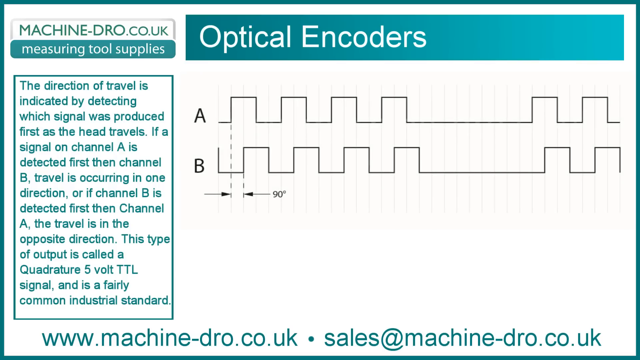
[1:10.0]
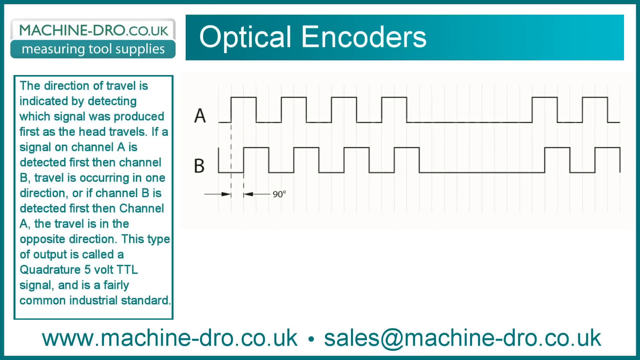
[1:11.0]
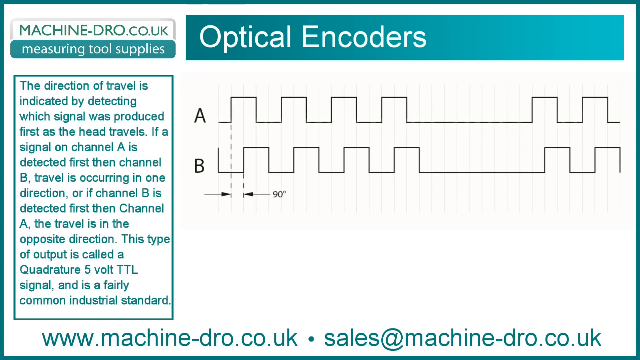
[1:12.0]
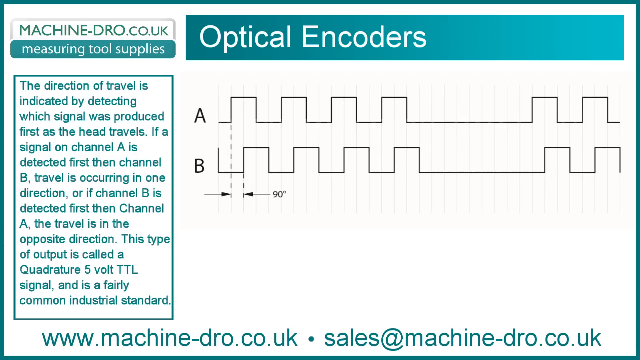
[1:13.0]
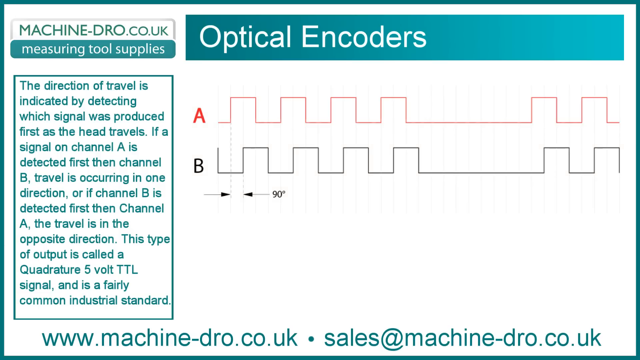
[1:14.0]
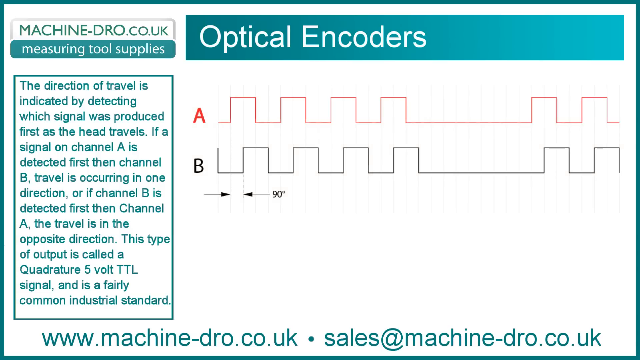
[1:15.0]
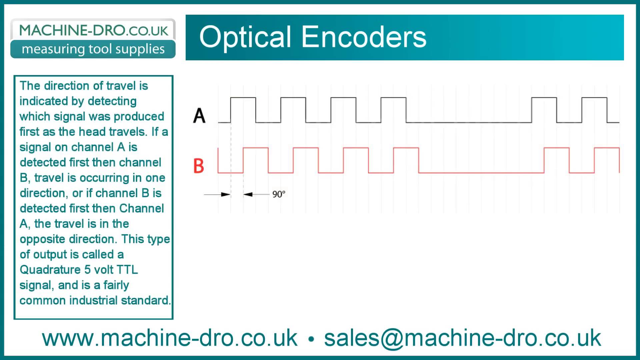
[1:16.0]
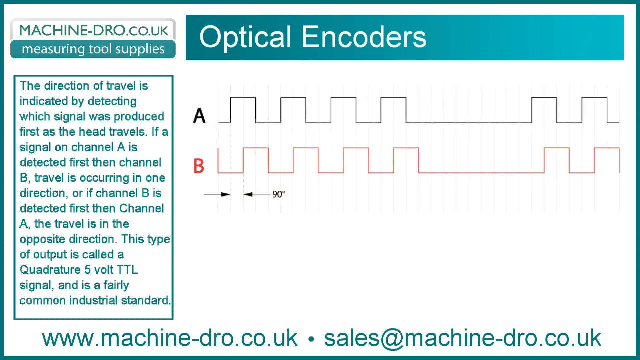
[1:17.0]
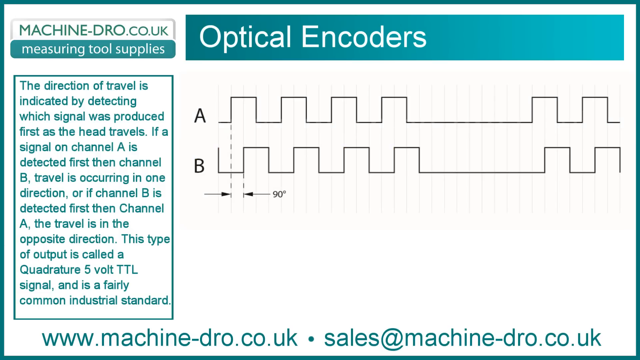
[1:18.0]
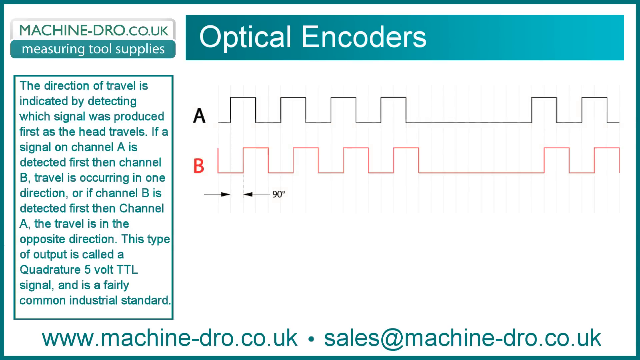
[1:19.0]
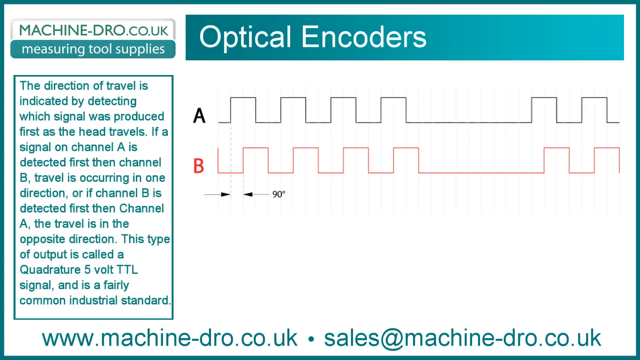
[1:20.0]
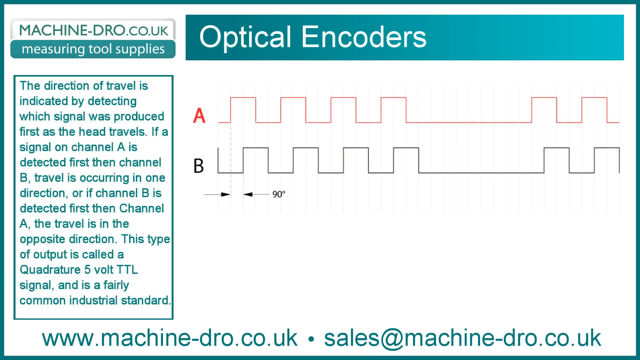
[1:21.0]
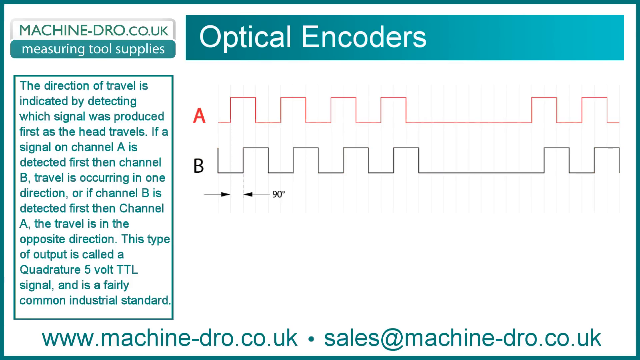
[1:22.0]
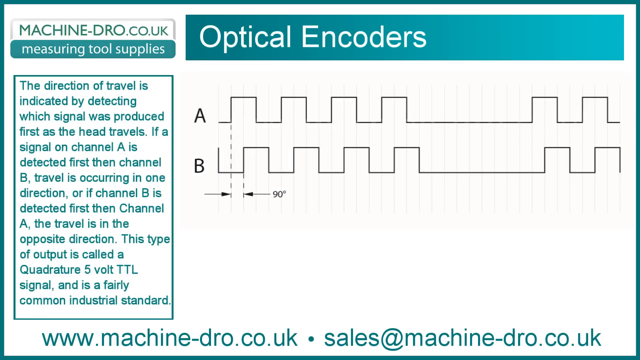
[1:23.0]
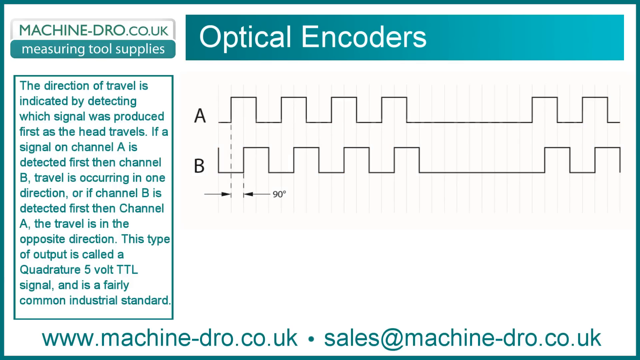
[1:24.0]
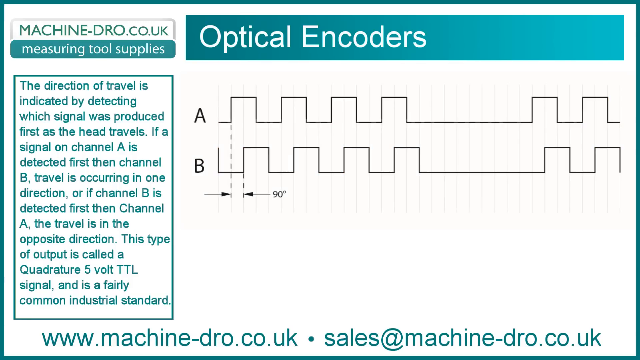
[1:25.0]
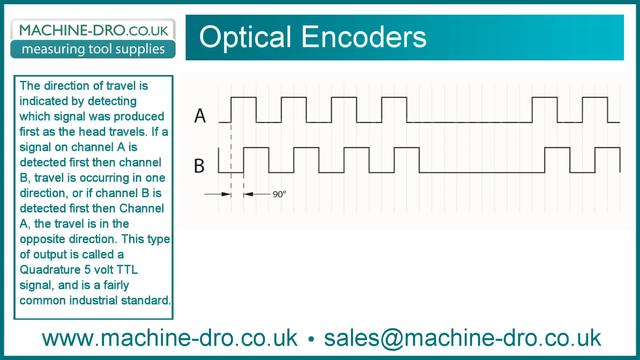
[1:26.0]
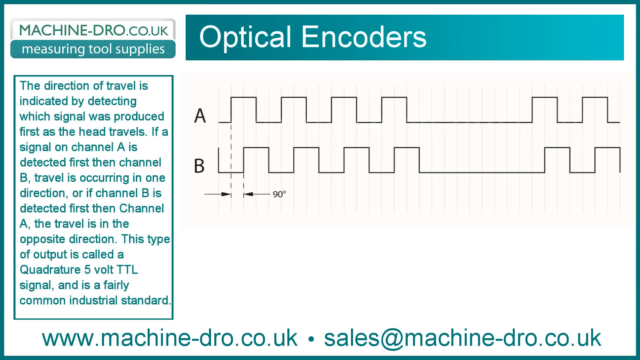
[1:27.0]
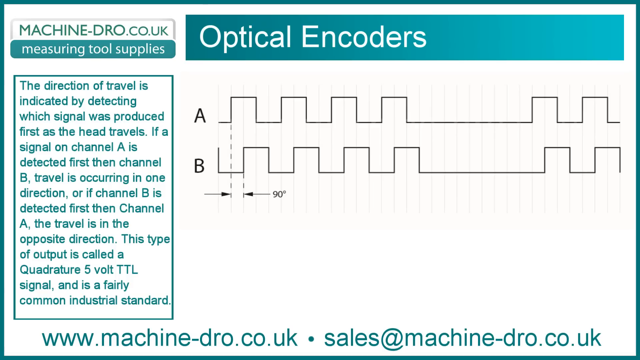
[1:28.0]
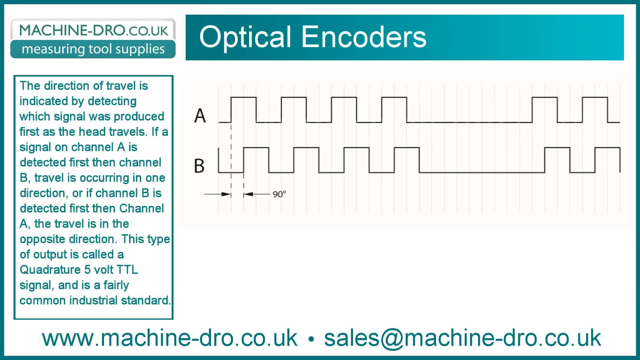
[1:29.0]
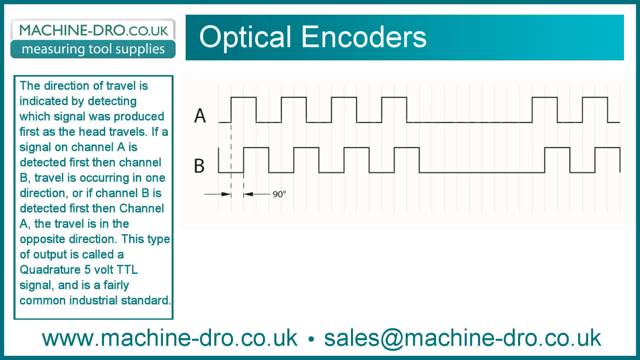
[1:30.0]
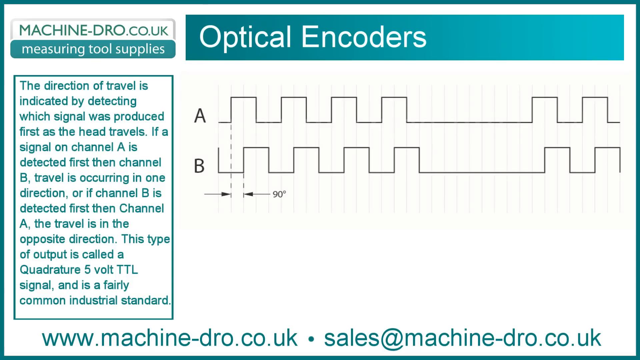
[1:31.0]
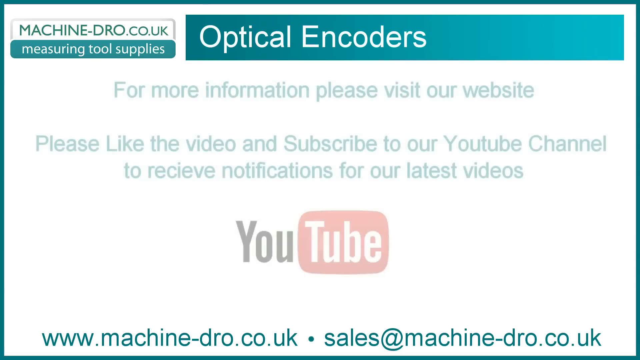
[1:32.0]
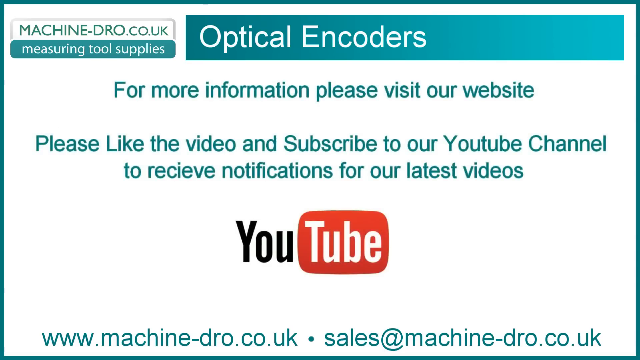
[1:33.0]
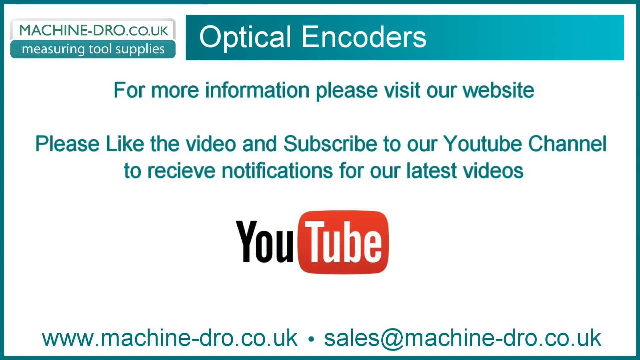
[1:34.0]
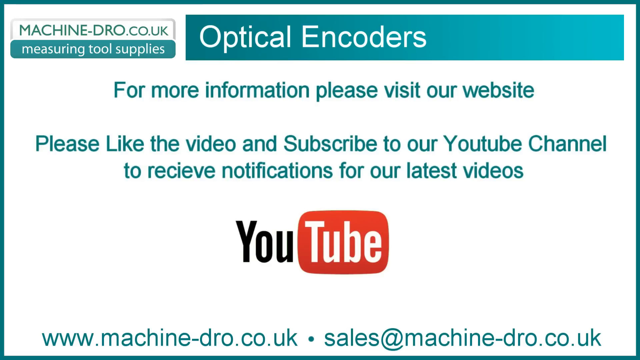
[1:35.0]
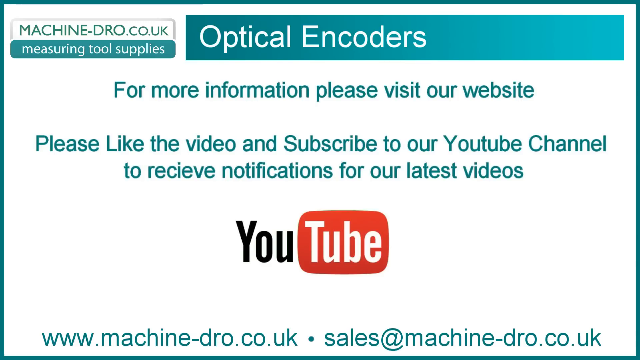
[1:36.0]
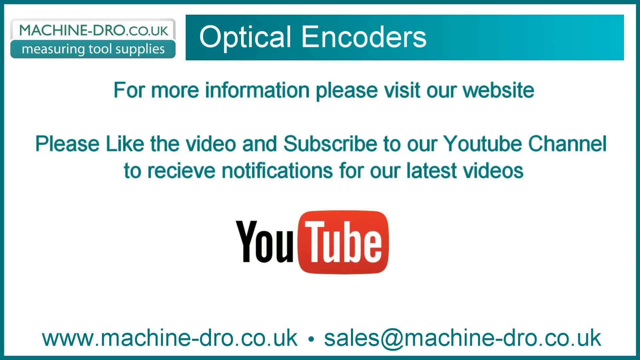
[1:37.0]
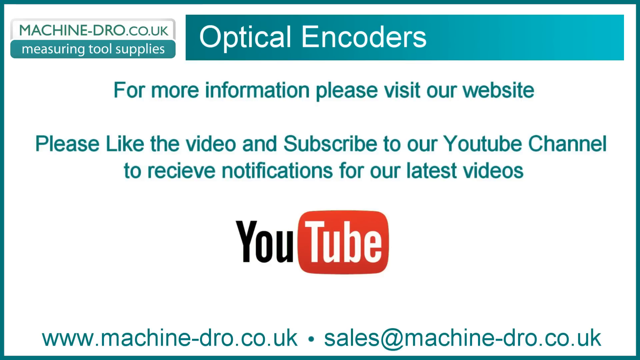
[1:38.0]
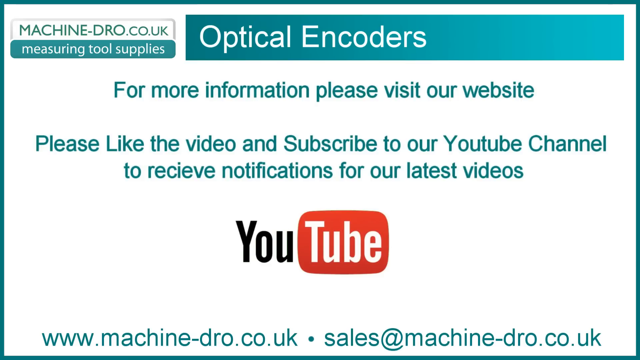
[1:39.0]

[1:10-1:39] The video concerns an optical encoder from Machinedro.co.uk, a measuring tool supply. A black and white graph of bars shows A on top and B on the bottom; then A turns red. The A line goes to the side, then up, across a flat top, down, across a flat bottom, then up again, repeating, while B goes the opposite way: when A goes up, B goes down. This shows the direction of travel. A box of description text next to the graph mentions a five volt TTL signal. The last page says "for more information, please visit our website. Please like the video and subscribe to our YouTube channel to receive notifications for our latest videos." At the bottom is the YouTube sign: a black "You" and a red box with "tube" written in white.